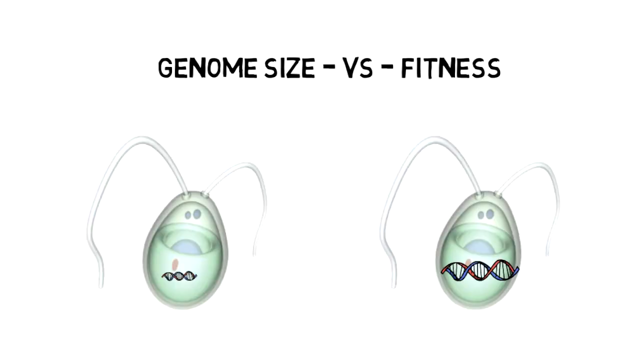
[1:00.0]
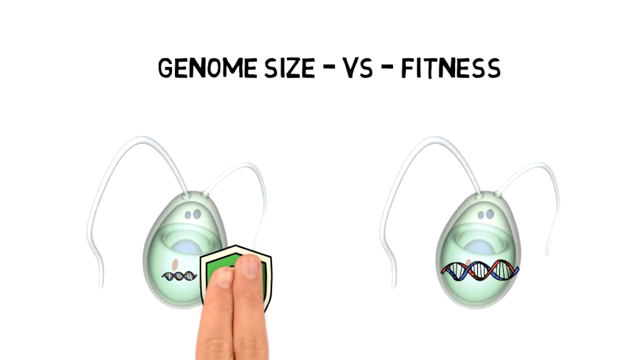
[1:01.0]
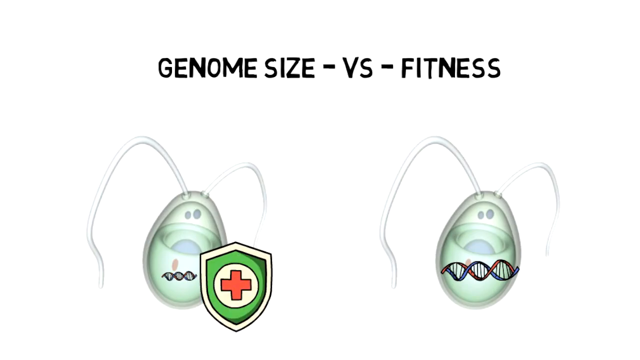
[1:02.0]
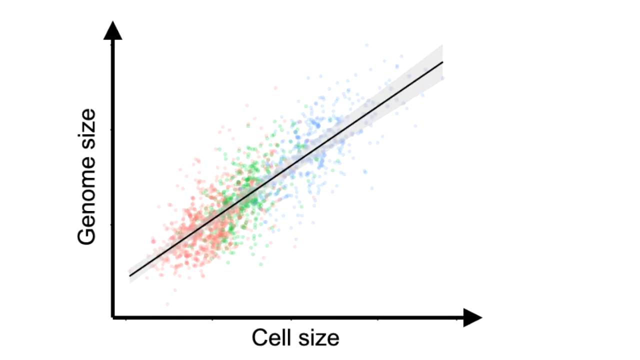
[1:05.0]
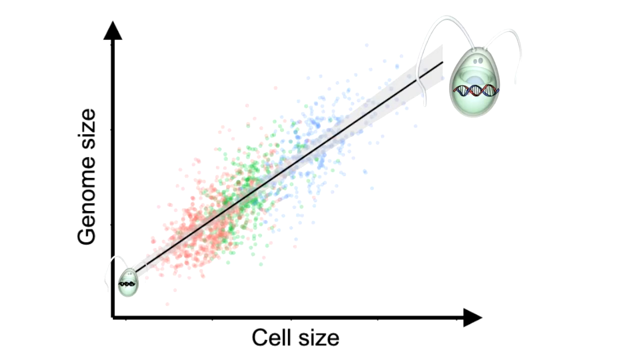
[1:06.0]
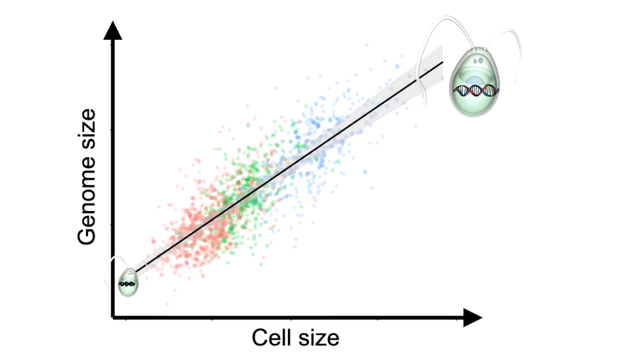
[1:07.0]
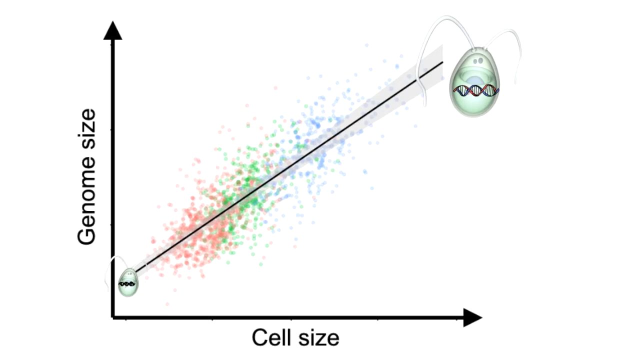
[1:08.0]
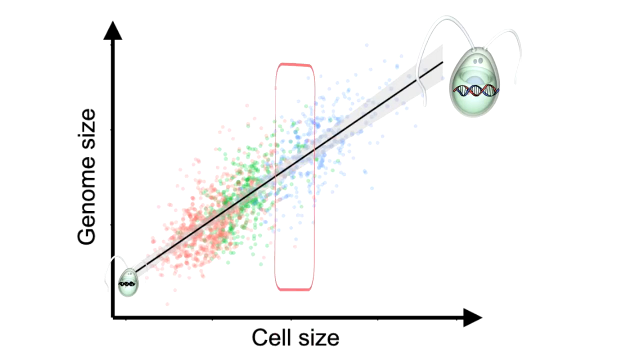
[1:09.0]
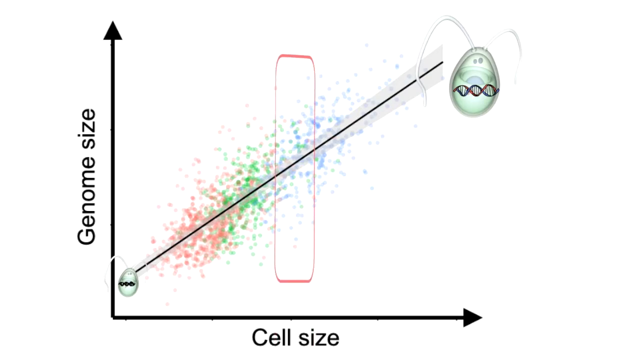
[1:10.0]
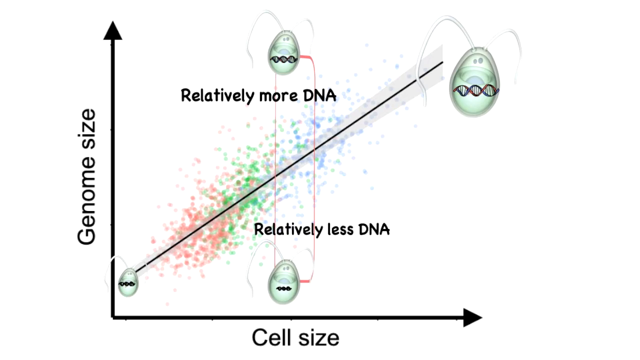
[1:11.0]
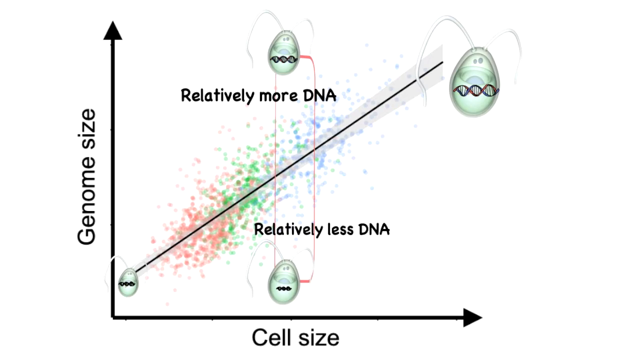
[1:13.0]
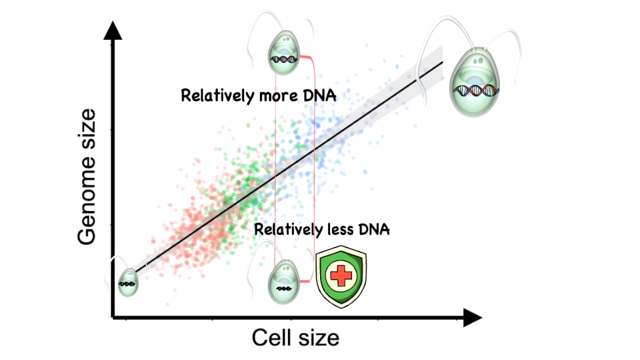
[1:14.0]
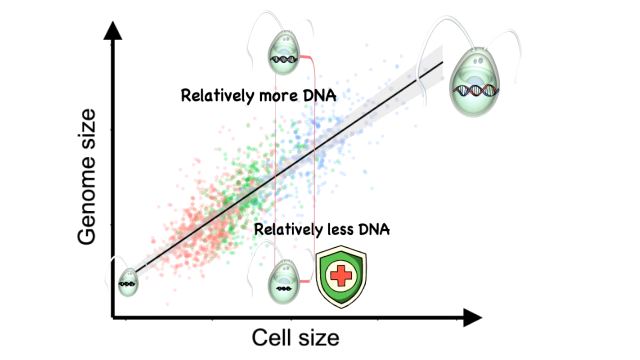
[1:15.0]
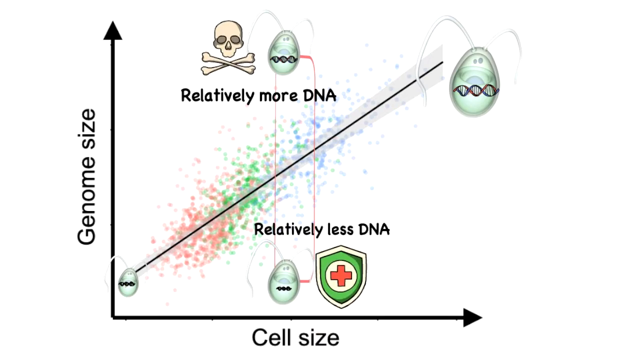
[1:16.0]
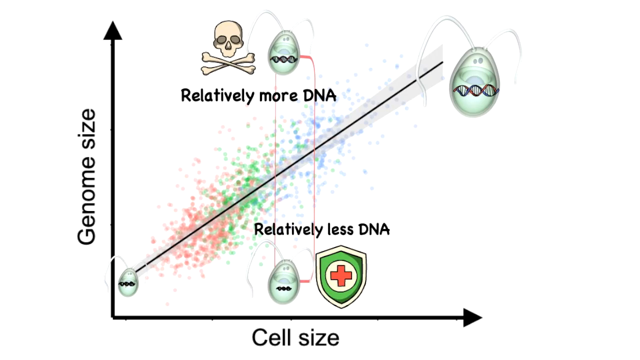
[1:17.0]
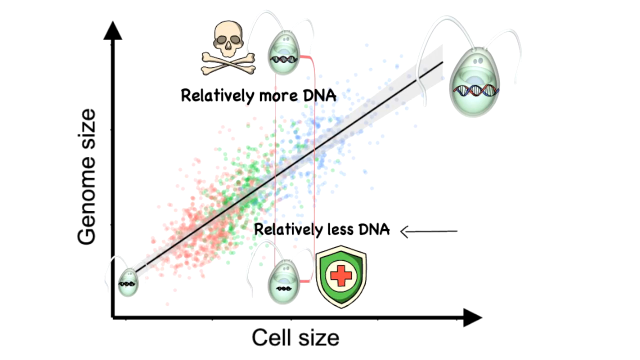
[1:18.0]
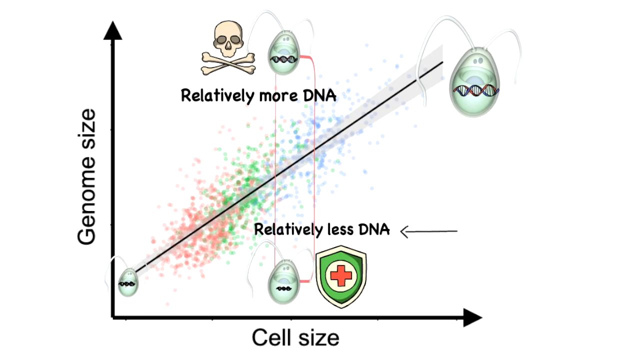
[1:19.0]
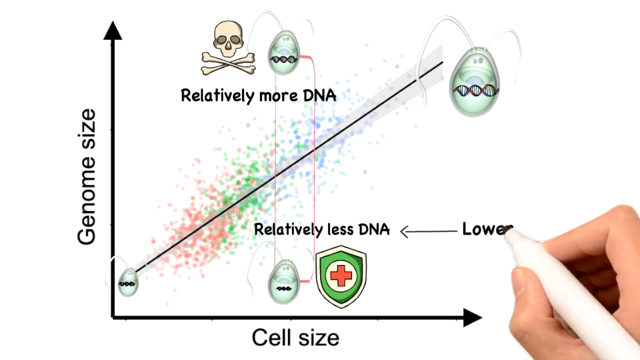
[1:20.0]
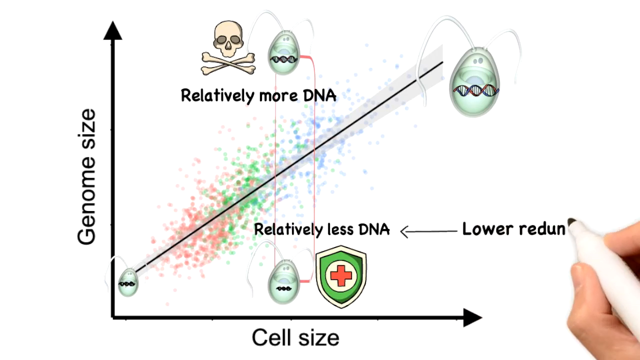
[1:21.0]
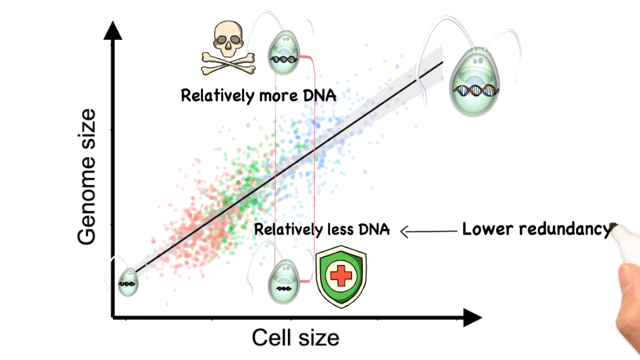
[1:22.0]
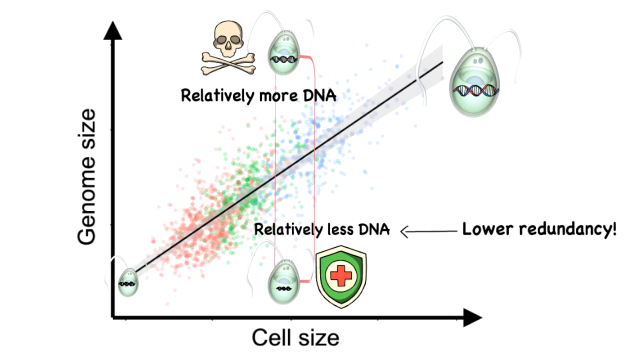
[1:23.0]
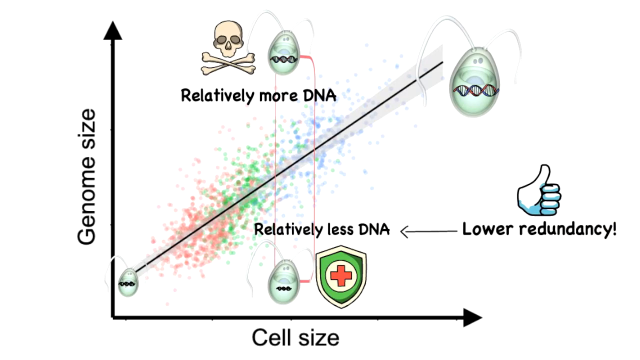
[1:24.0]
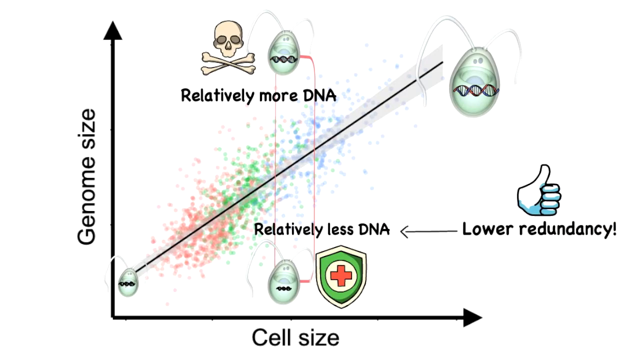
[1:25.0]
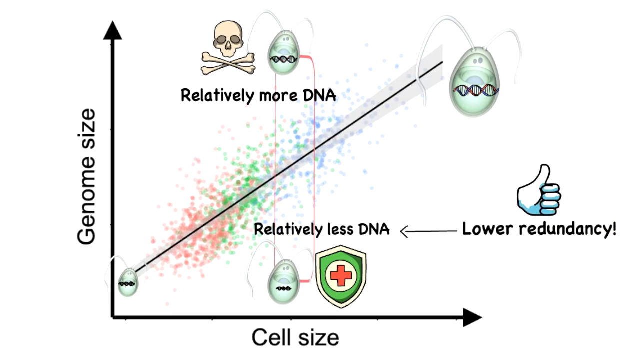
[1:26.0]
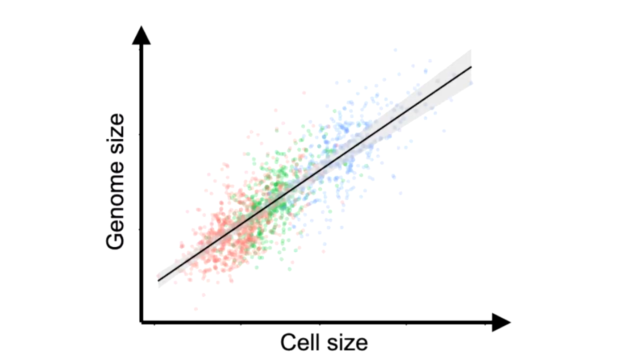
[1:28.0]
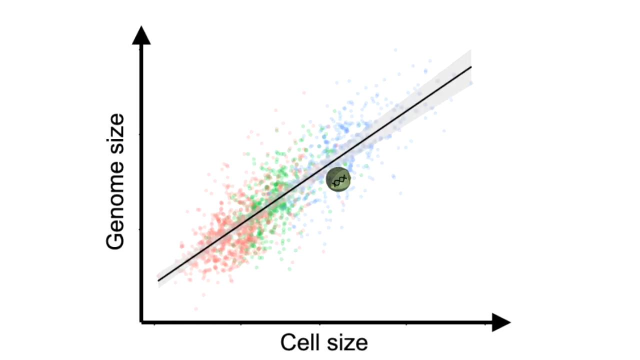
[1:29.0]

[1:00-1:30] A white screen has black letters at the top reading "genome size-BS-fitness". Below are two things that look like cells, or like bugs. They are shaped like eggs, have a black horizontal DNA strand in their bottom part, are green in the middle, and have two white things that look like antennae coming out of the top. Using the index finger and thumb, a right hand slides a green shield with a red cross in its center up above the little cell on the left. That disappears and an arrow pointing to the top of the screen appears; its line runs down and makes a 90-degree angle to the right. A line runs from the bottom left to the top right. On the left side of the arrow is "genome size", and a little cell has a line running to a larger cell, with "cell size" at the bottom. Everything is in black. Then a red rectangle appears, with "relatively more DNA" and, at the bottom, "relatively less DNA". The green shield appears at the bottom and the skull and crossbones appears at the top.